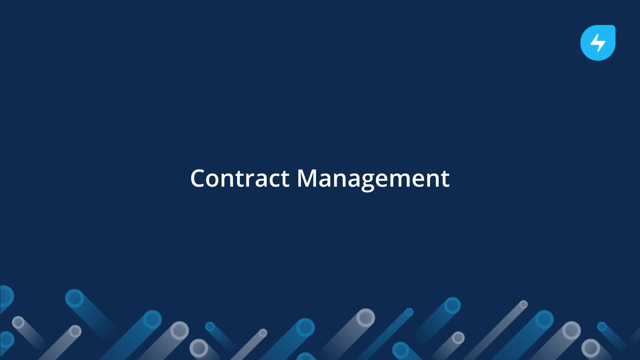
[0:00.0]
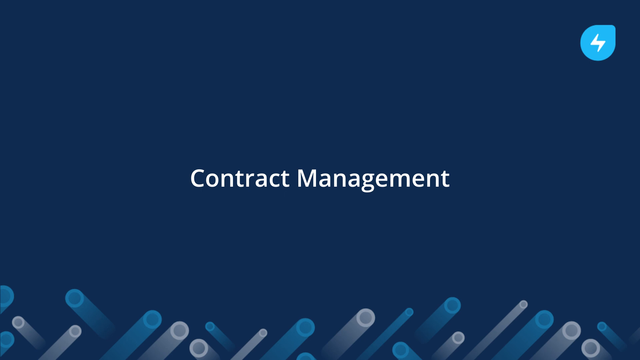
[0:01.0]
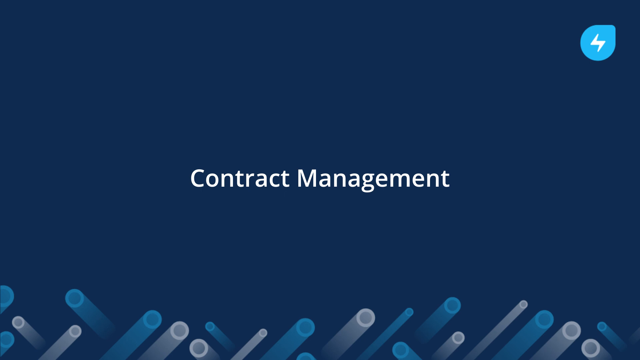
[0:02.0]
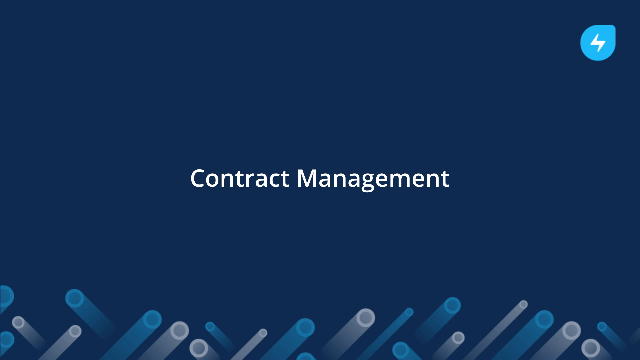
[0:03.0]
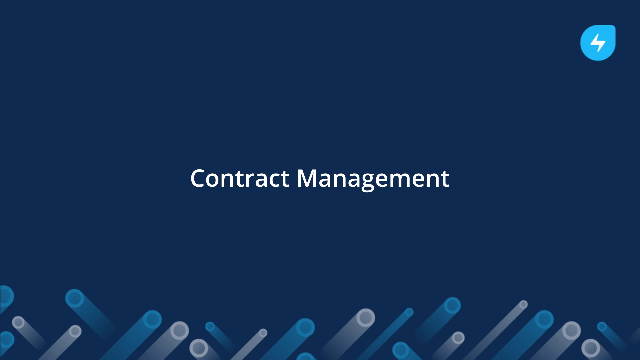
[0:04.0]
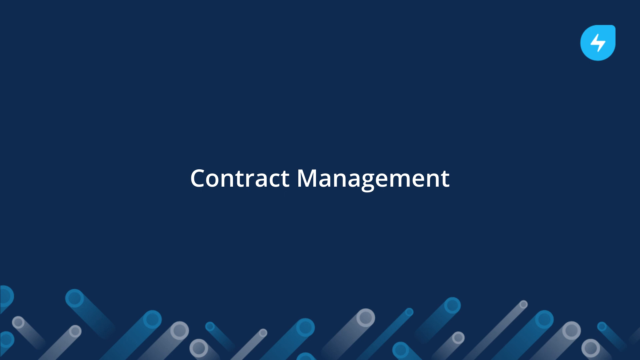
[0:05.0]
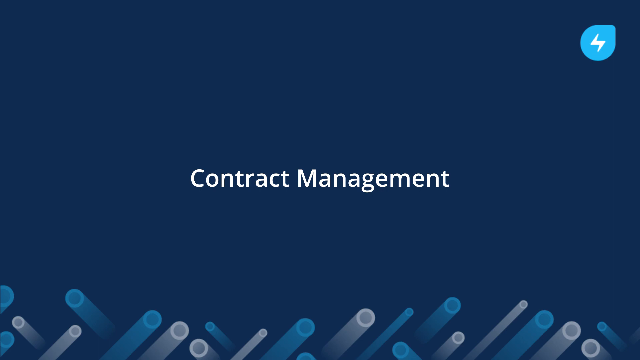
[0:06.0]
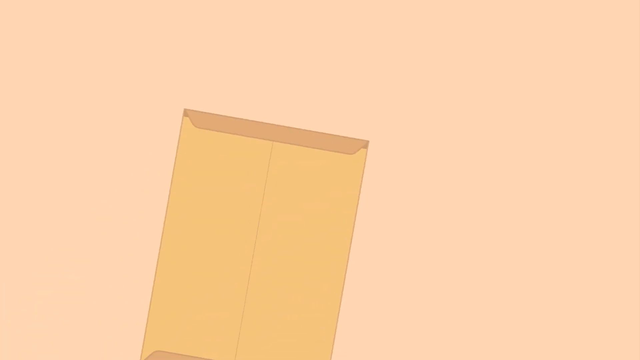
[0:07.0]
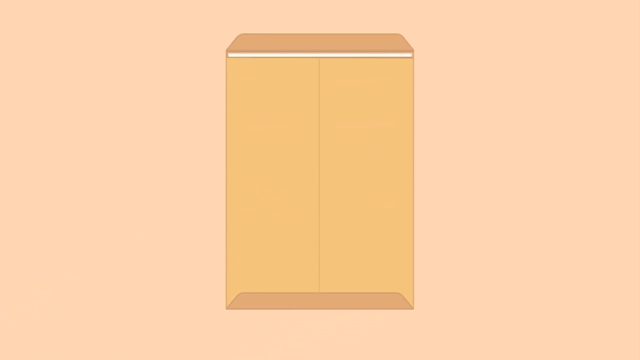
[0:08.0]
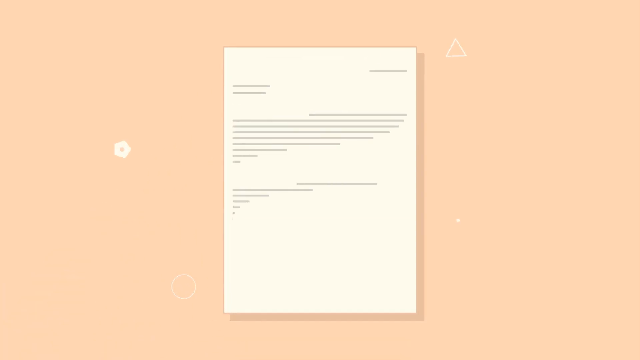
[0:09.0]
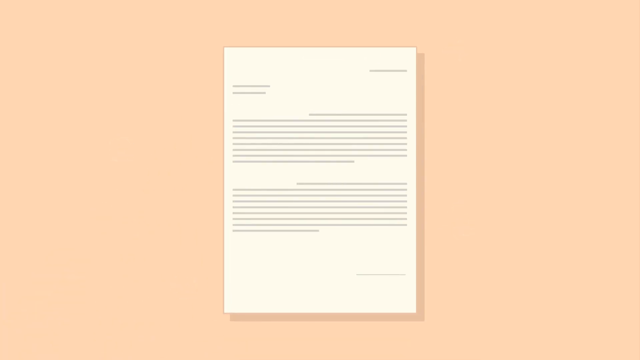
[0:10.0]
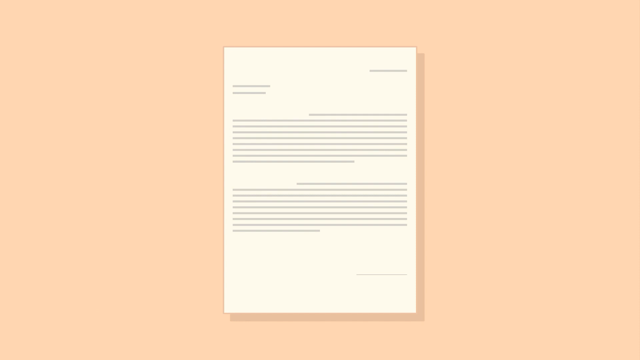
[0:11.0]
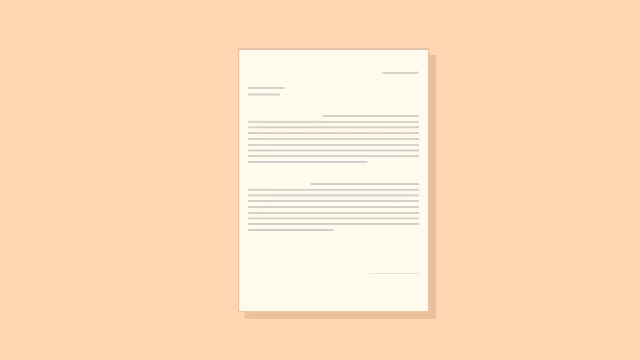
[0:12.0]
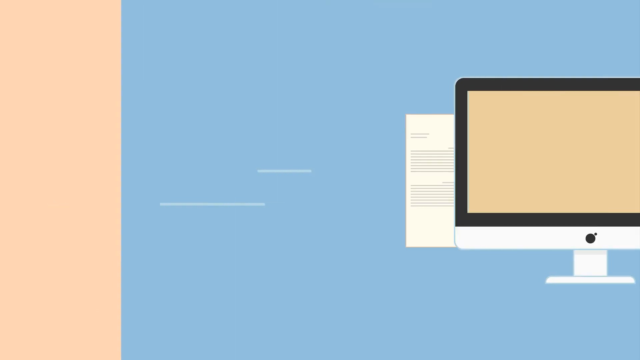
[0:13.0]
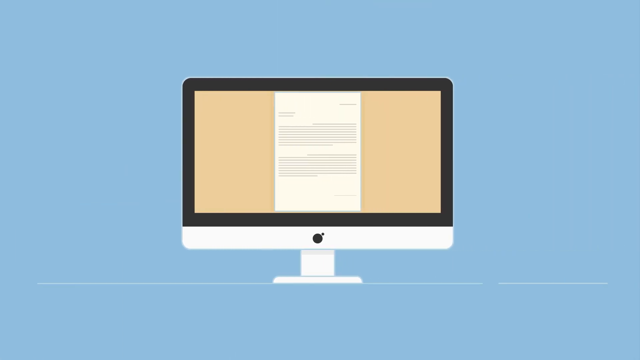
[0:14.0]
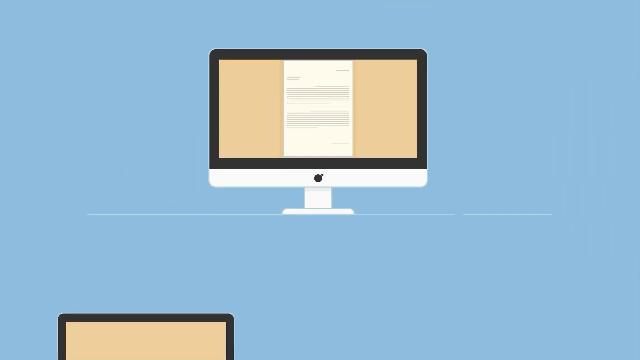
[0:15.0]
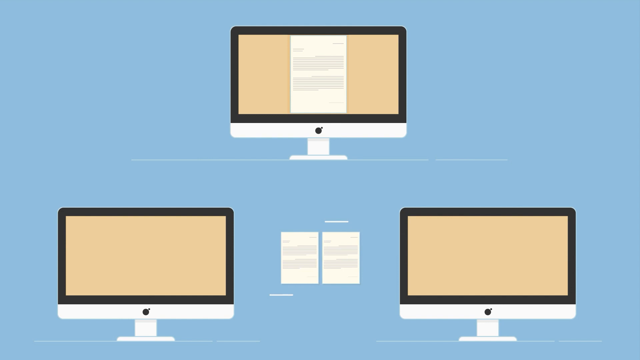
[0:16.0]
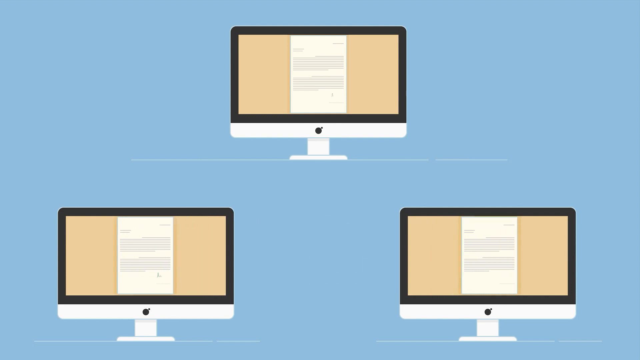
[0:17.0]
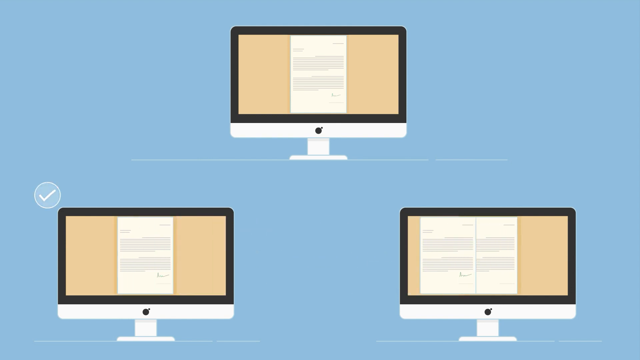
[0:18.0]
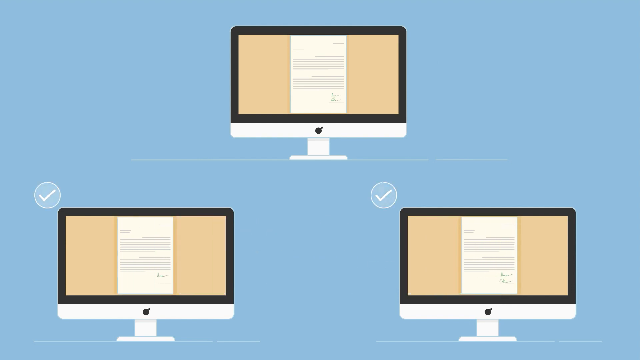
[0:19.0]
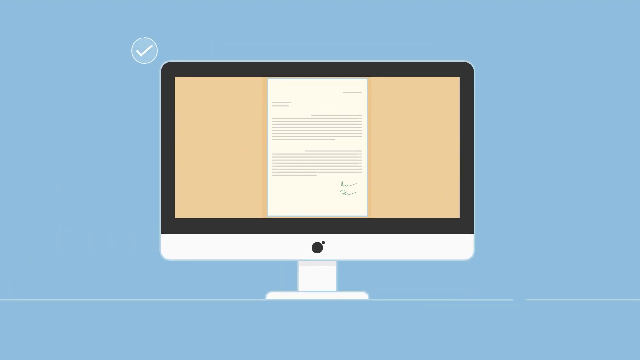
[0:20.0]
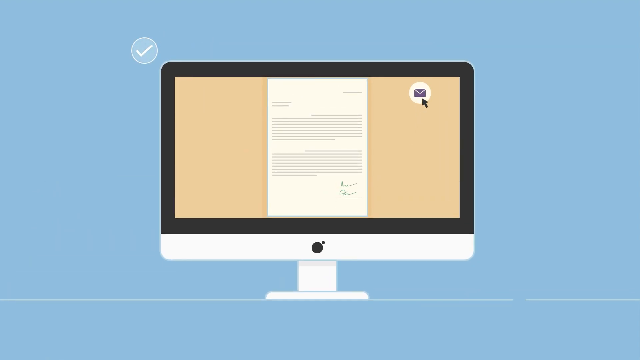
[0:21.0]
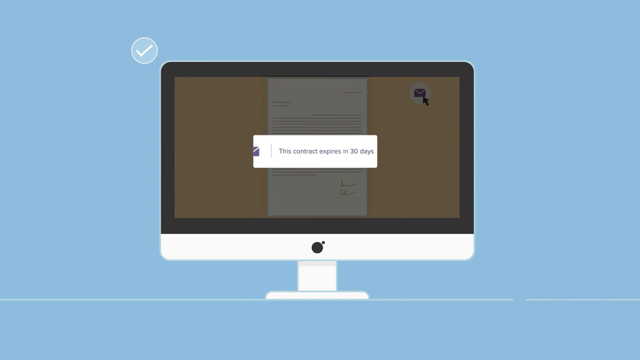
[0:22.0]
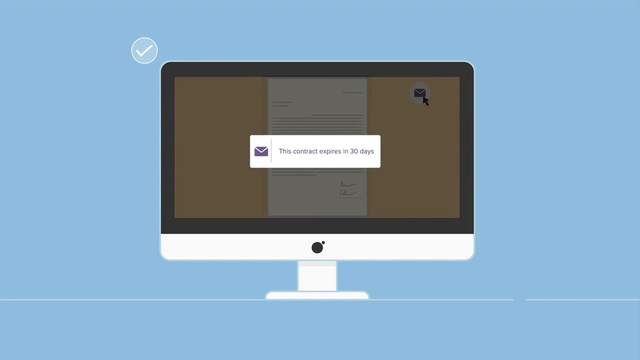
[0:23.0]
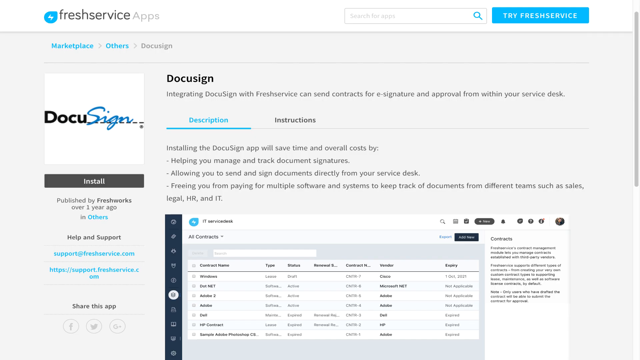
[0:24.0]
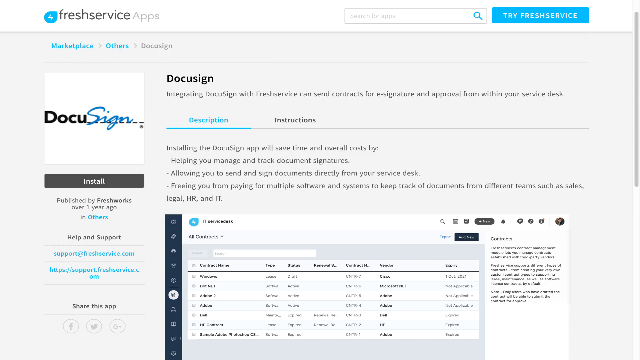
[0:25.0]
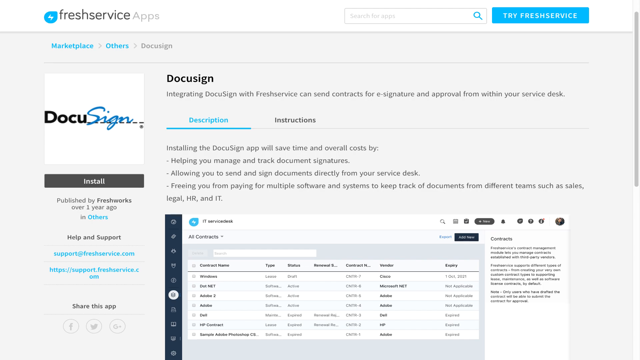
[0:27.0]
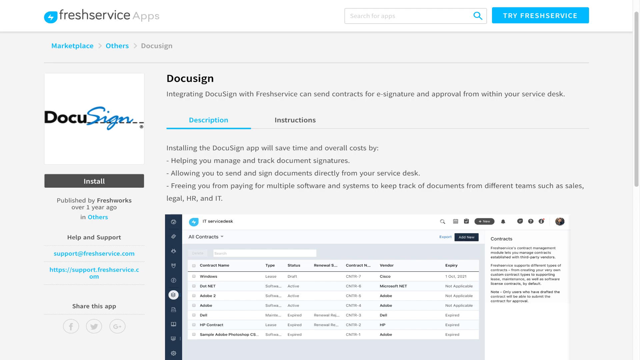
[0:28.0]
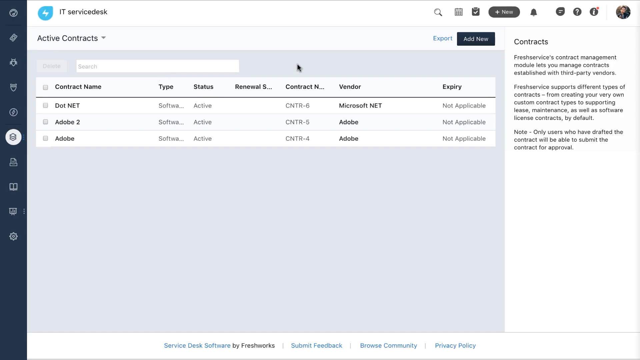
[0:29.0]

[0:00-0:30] The text "routine contract management" appears on a blue background, with some circles at the bottom and a lightning bolt with a blue background at the top right. The screen then turns pink, and an animated brown envelope opens and moves down, leaving a white piece of paper, possibly the contract. The pink screen and the white paper zoom out, revealing them on a MacBook computer; the background outside is now blue, while the MacBook is black and white. The video zooms out a bit, and the file travels out of the animated computer to the middle and splits to MacBooks on the right and left, apparently showing the file viewed on three computers. An email appears on the first computer, at the top, reading "this contract expires in 30 days." A webpage for the Fresh Service app is then shown.